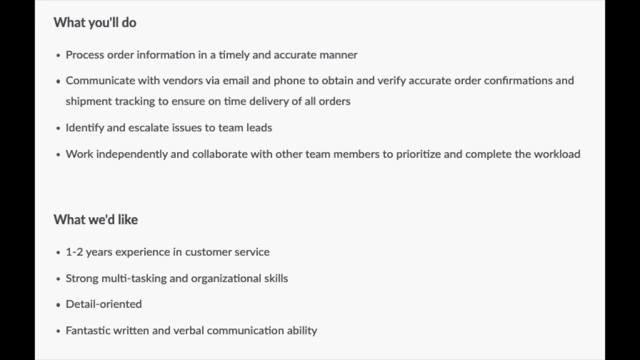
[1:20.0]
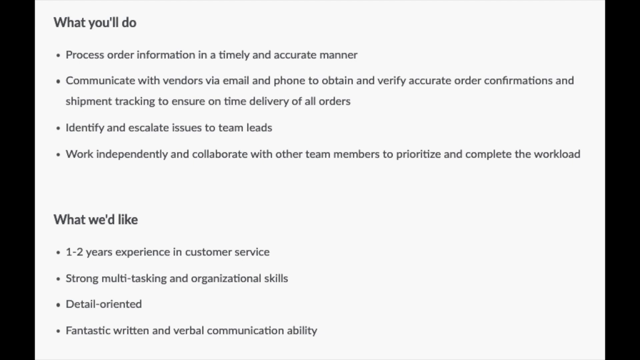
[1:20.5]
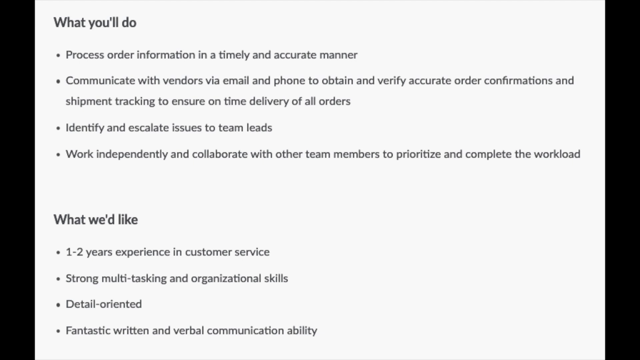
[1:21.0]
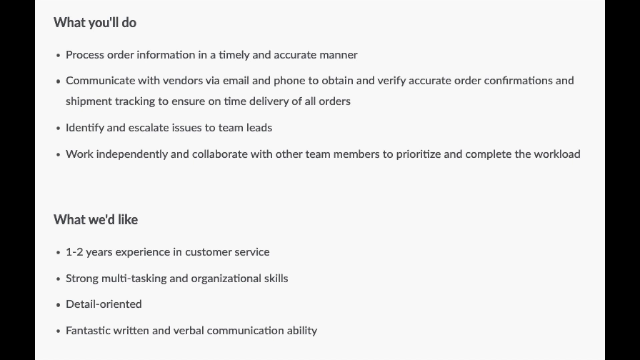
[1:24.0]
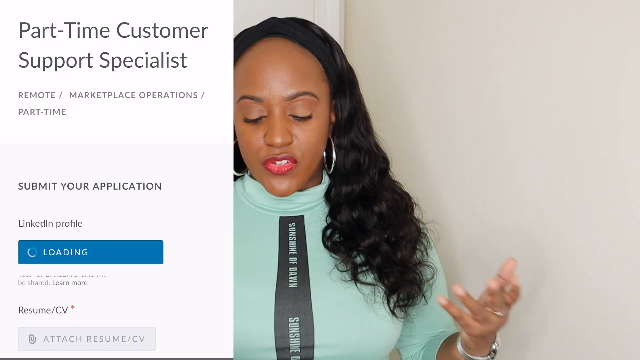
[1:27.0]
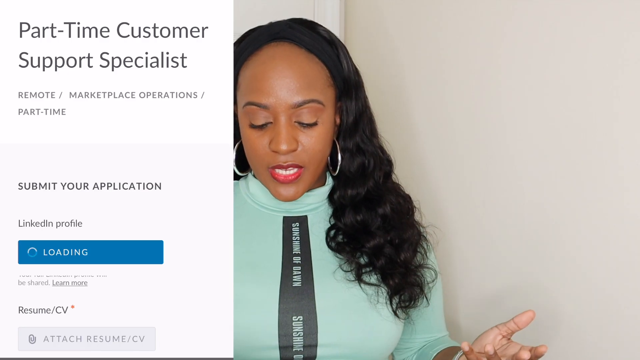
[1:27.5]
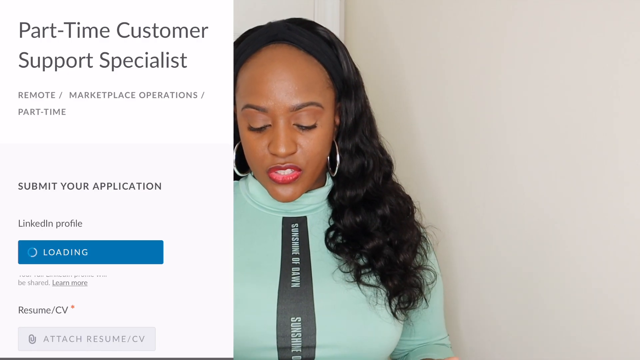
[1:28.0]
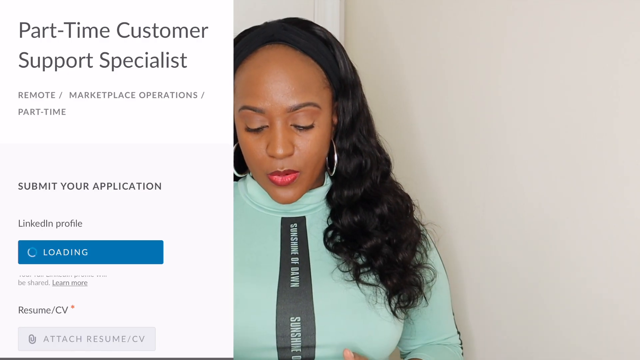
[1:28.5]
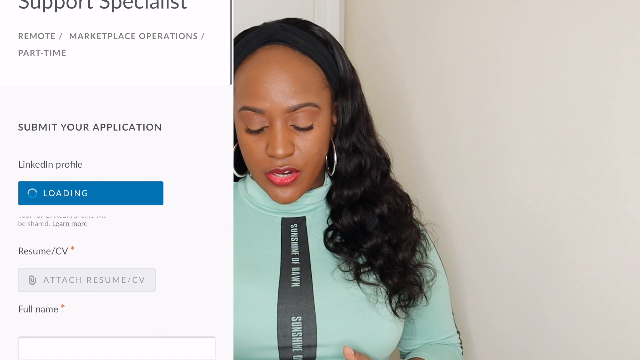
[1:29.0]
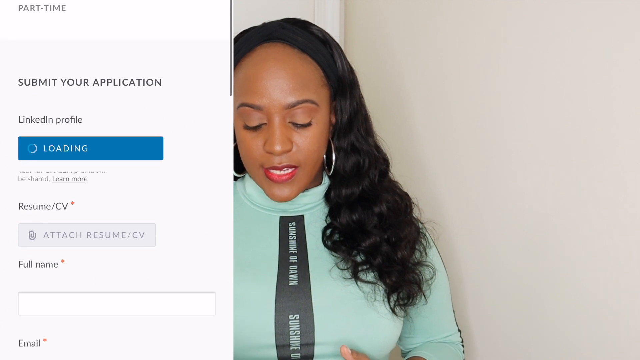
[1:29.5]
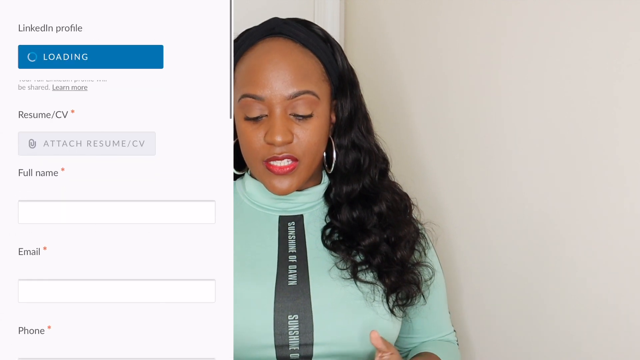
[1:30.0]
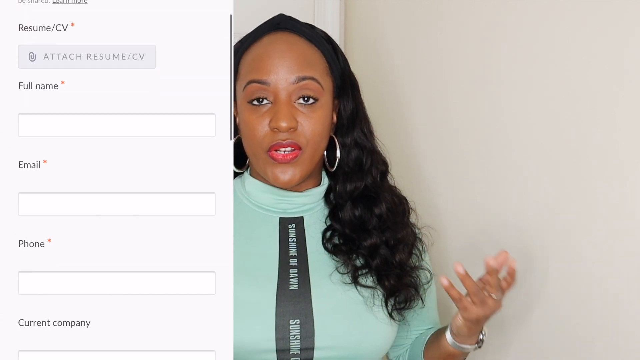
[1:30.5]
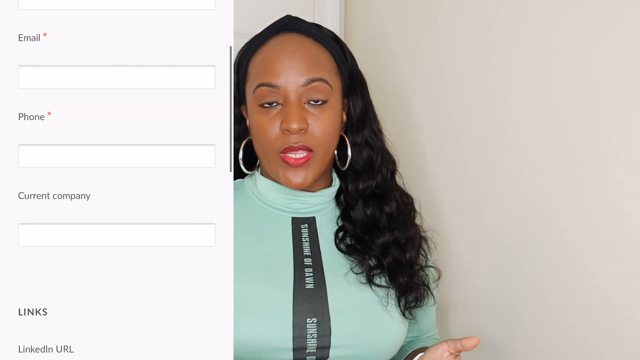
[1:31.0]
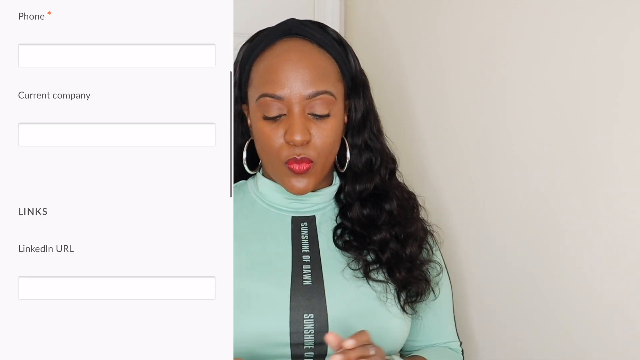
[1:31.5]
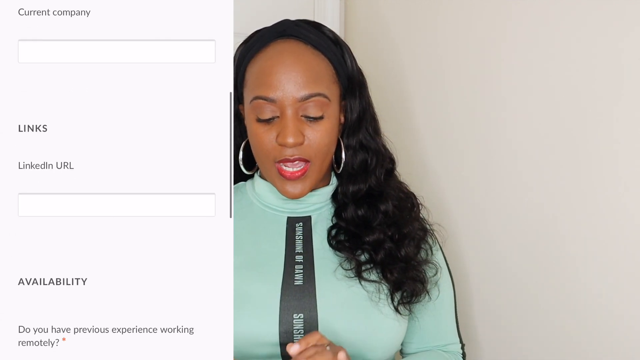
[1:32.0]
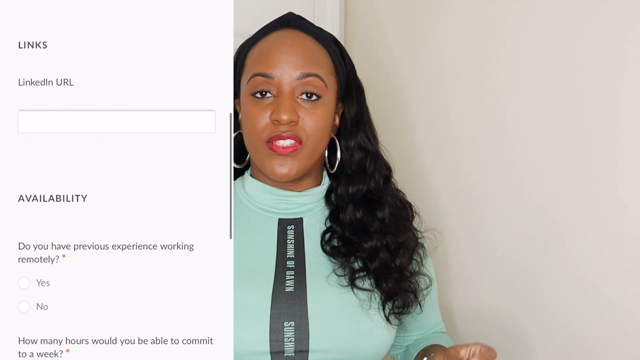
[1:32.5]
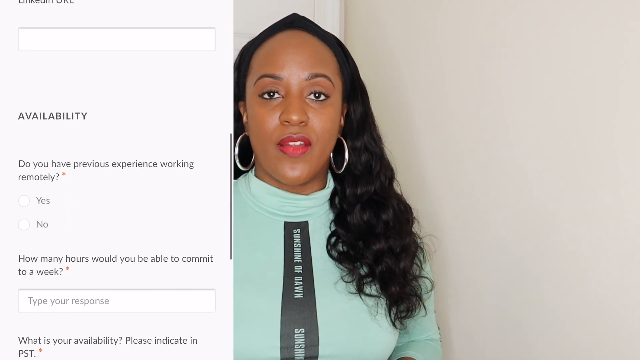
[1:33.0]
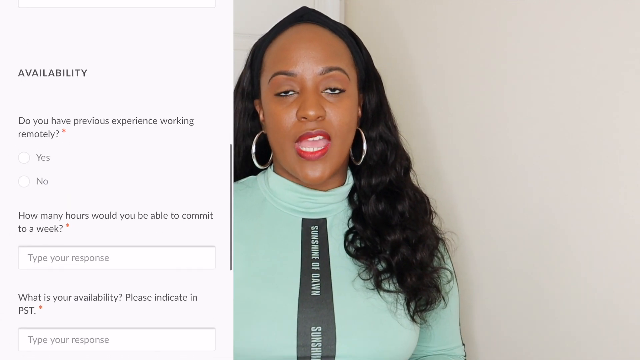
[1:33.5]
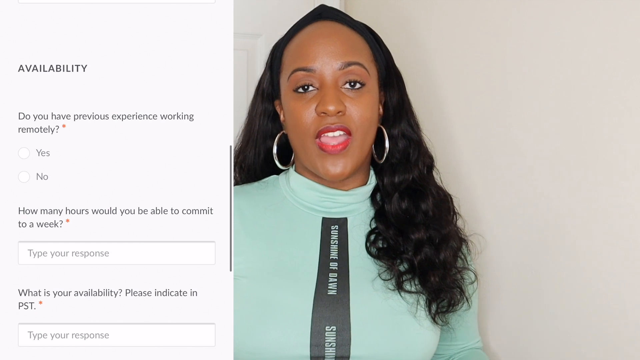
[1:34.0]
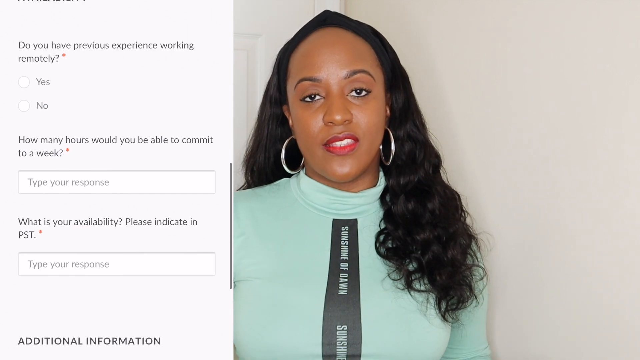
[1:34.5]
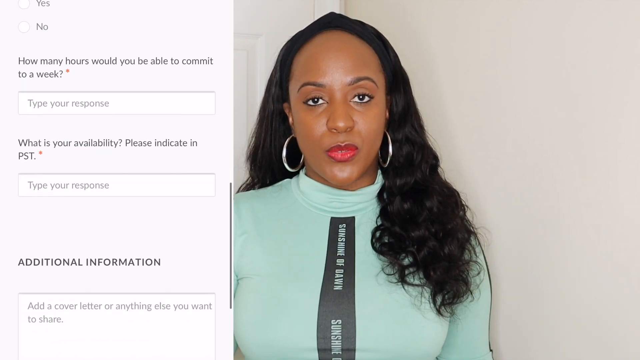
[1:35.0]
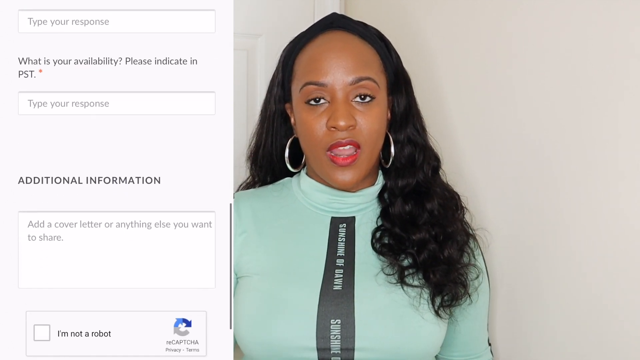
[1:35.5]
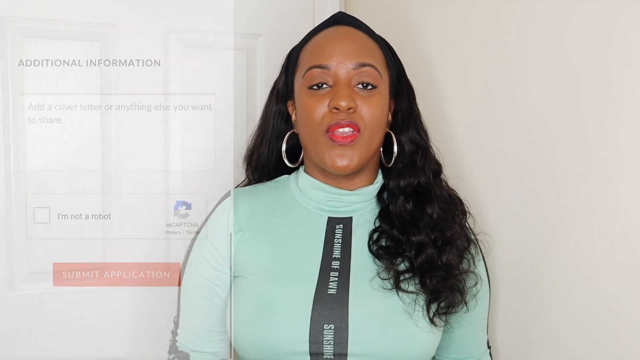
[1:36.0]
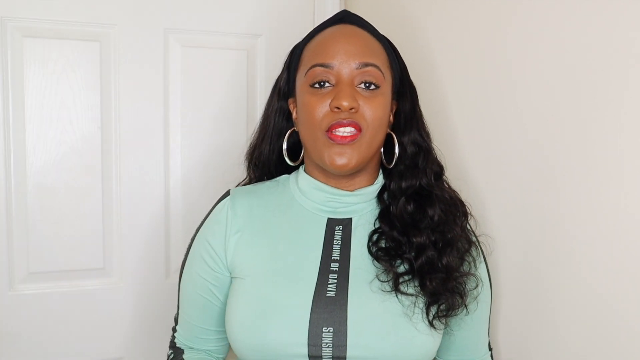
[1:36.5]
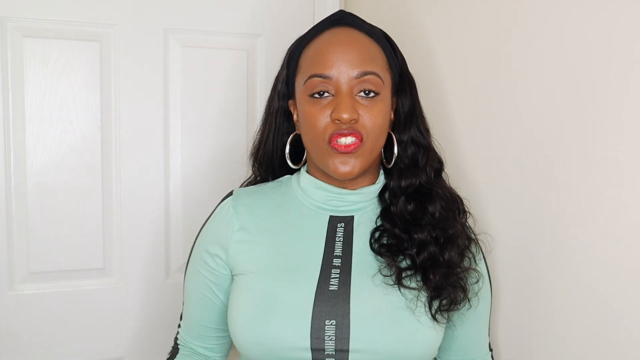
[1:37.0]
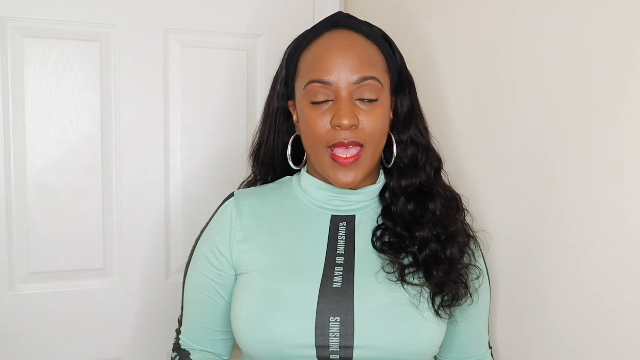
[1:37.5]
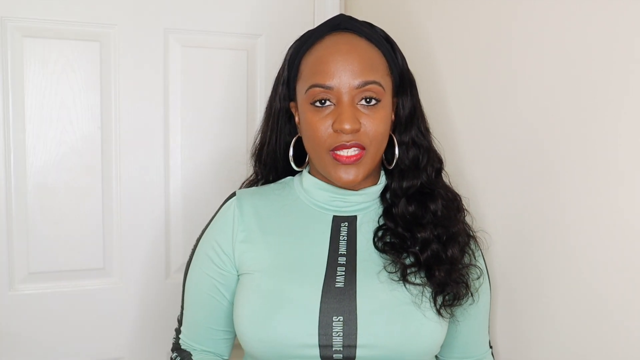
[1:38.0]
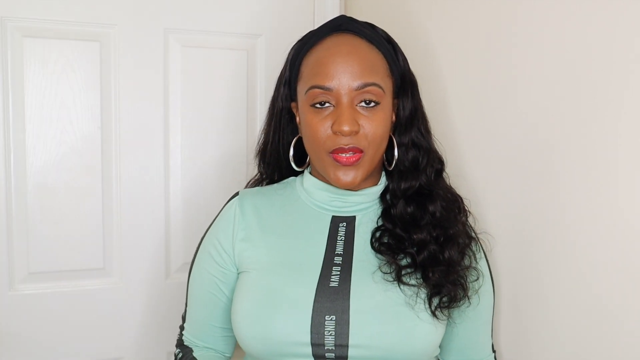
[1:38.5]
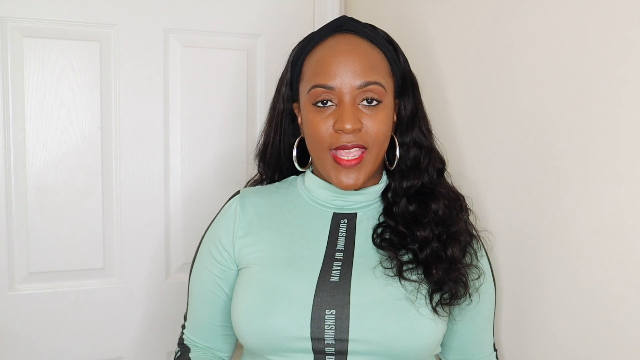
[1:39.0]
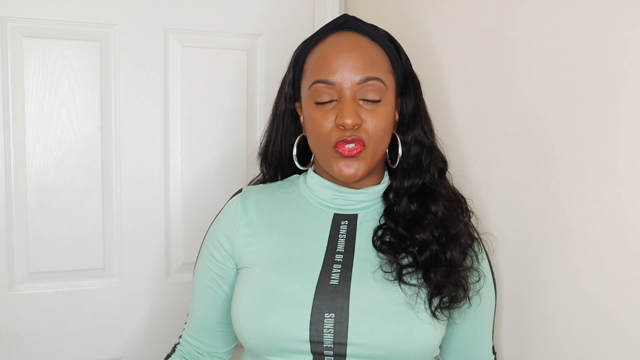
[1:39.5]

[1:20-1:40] A black border surrounds a white background with black lettering that takes up almost the entire screen. At the top are the job duties in four bullet points: processing orders, communicating with vendors, identifying issues, and working independently and collaboratively with other staff. Below, in bold, "what we'd like" lists one to two years of experience, strong multitasking, being detail-oriented, and fantastic written and verbal communication skills. The video then switches to a split screen. The woman is on the right side, off-center, with part of her body cut off. She is in the same room with the white background that is part door, part wall, and wears the same tight teal long-sleeve mock-turtleneck shirt with a black band with white writing down the front center, silver hoop earrings, full makeup with red lips, and the black headband; only the curled part of her long black hair that is over her shoulder is visible. On the left, she looks like she is scrolling through the submit-your-application page while talking. She scrolls very fast, so it is hard to see exactly what is shown, but it appears to be all the information needed to submit an application. When she reaches the bottom, the screen disappears and only she remains in her room, talking.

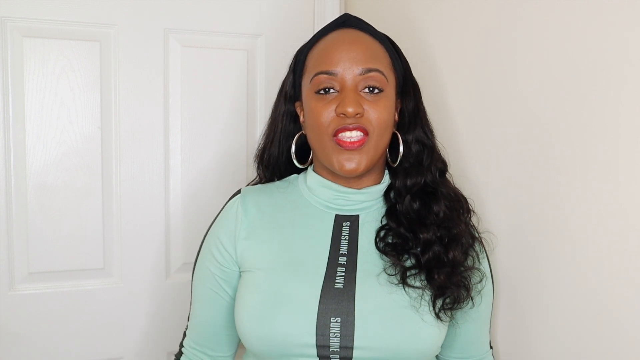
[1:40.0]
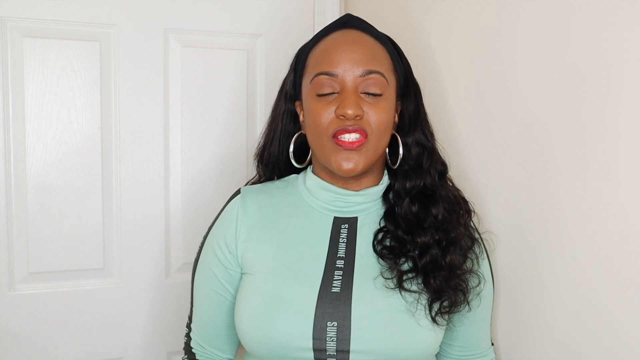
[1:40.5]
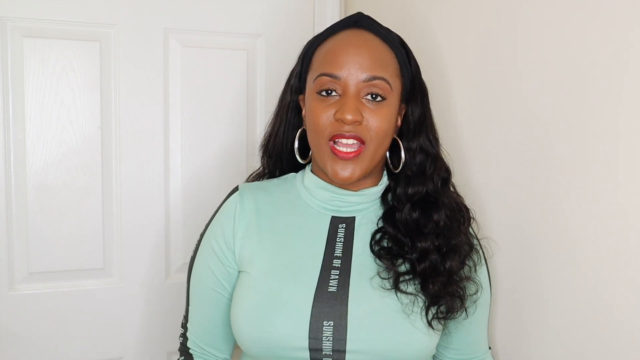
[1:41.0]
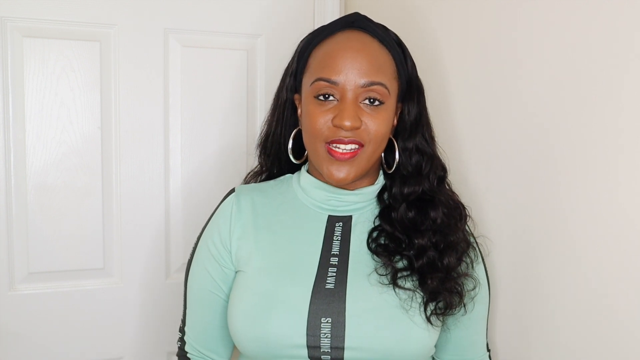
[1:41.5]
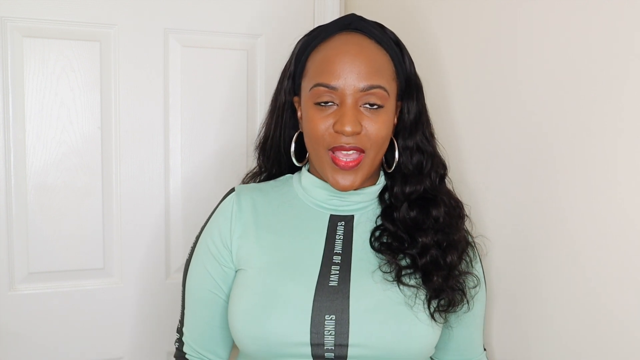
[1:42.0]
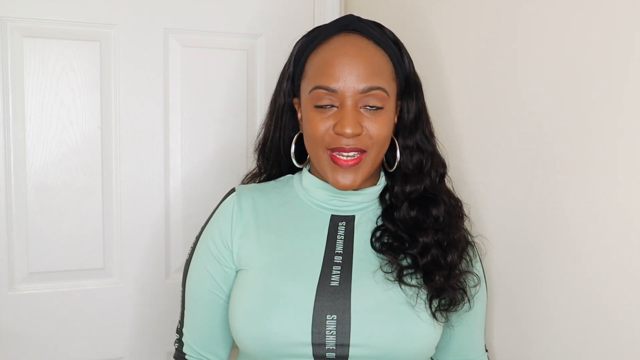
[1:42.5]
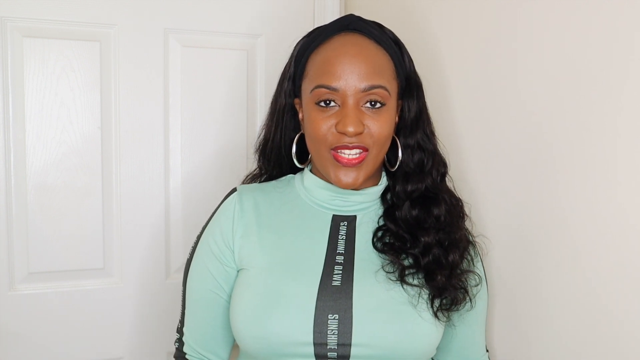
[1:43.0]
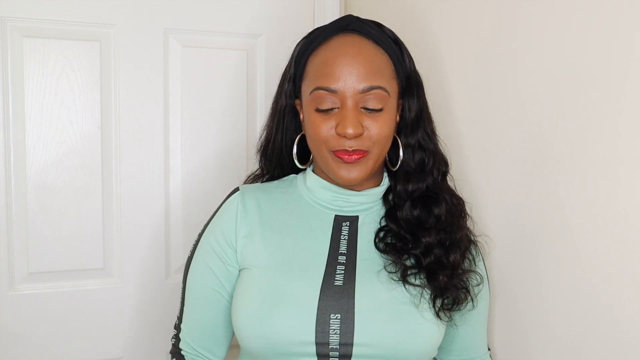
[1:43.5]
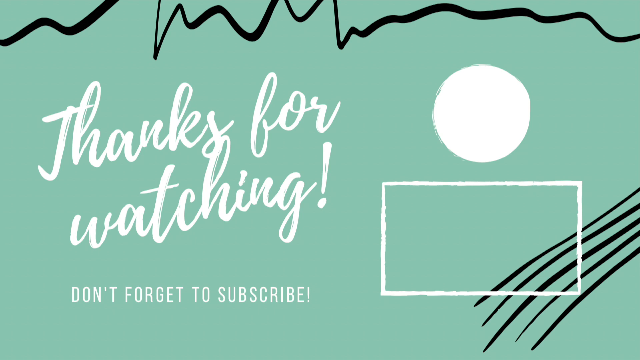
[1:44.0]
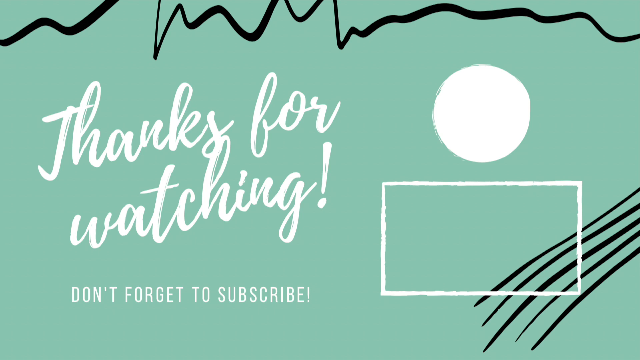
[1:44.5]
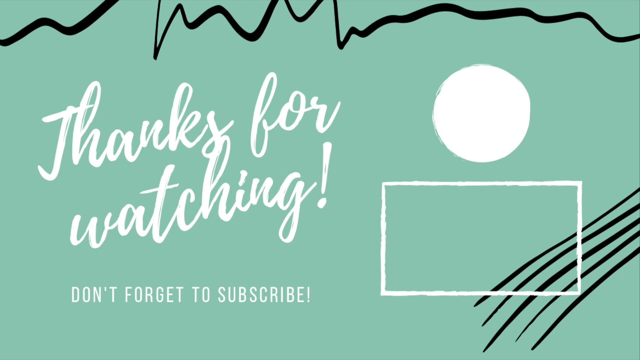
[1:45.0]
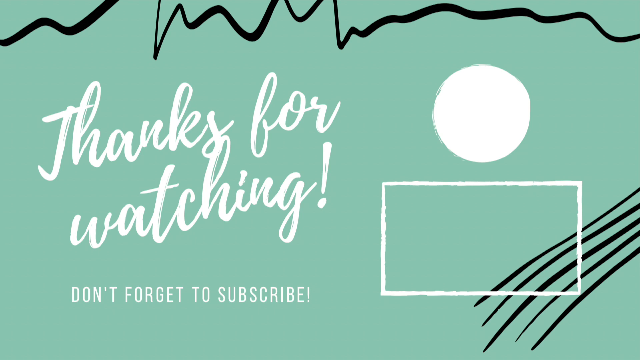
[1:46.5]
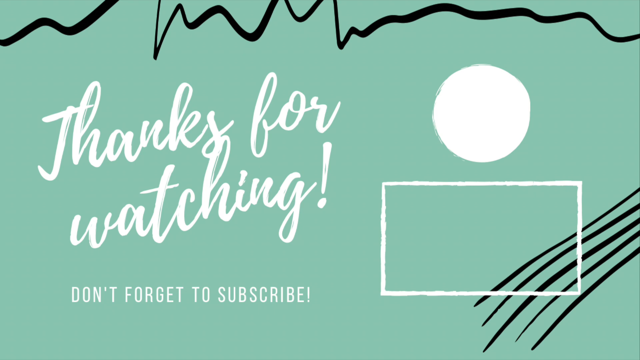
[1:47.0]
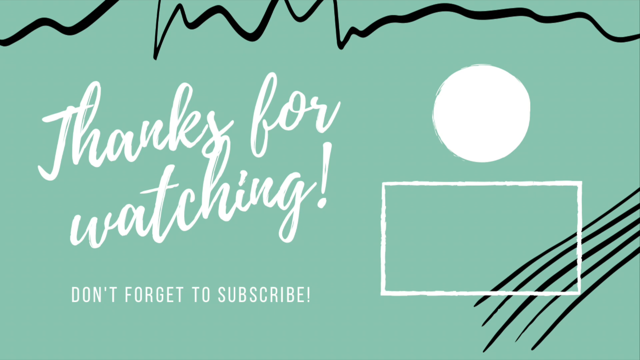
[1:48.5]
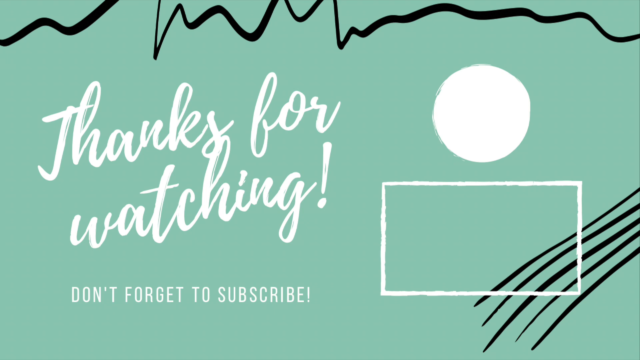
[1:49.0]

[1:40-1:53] The same young Black woman is in the same room, with part white wall and part white door behind her, and about half her body is visible. She wears the same tight teal mock-turtleneck shirt with a black bar down the very front center and on her arms from the shoulders down, bearing unreadable white writing. She has her silver hoops, full makeup with red lips, and a black headband keeping her jet-black hair off her face; the hair on one side goes behind her shoulders, and the other side is curly and over her shoulder. She talks to the camera very animatedly, then finishes. An end screen follows with a teal background and black squiggly lines at the top. Underneath is a white circle on the right and a see-through box with a white outline, through which the teal shows. Black lines run from the right toward the left and pass through the back of the box. To the left, under the squiggly lines, white, kind of cursive writing reads "thank you for watching!" followed by "don't forget to subscribe." The screen then fades out.